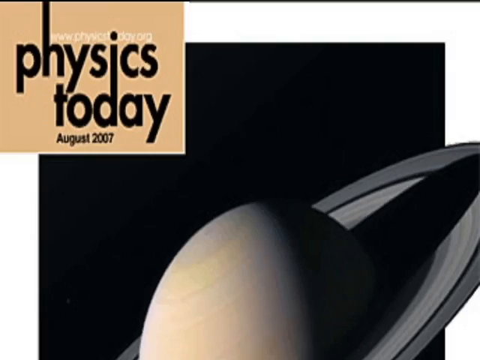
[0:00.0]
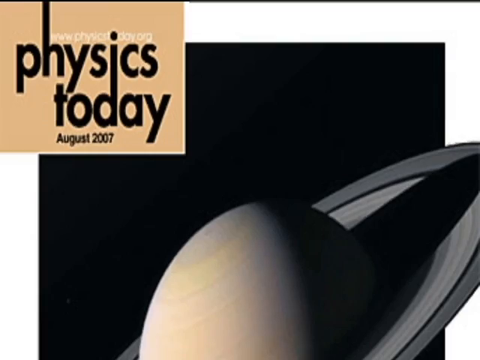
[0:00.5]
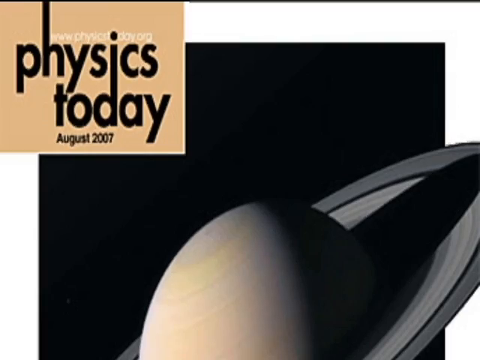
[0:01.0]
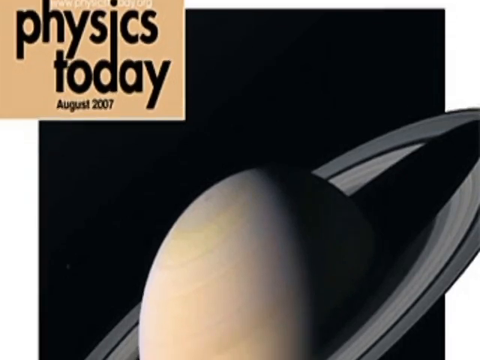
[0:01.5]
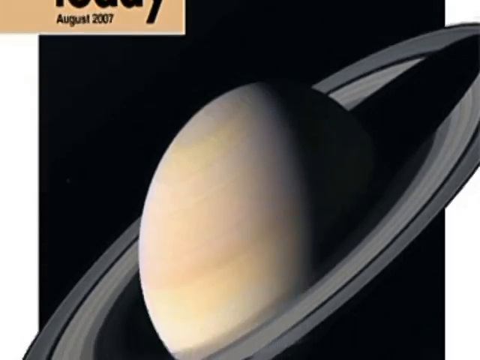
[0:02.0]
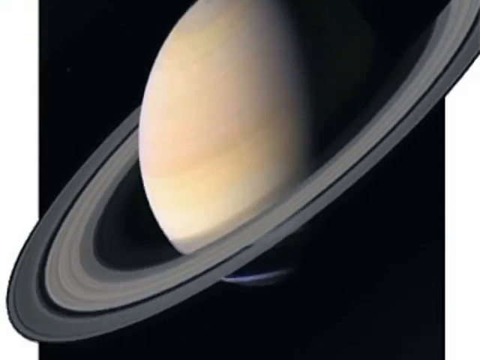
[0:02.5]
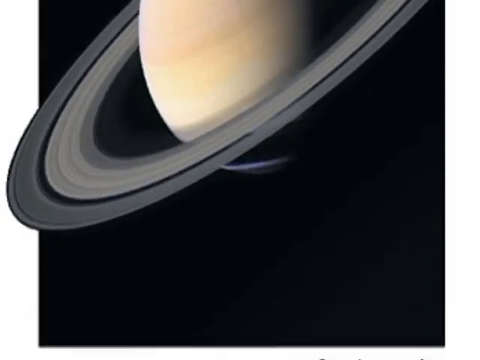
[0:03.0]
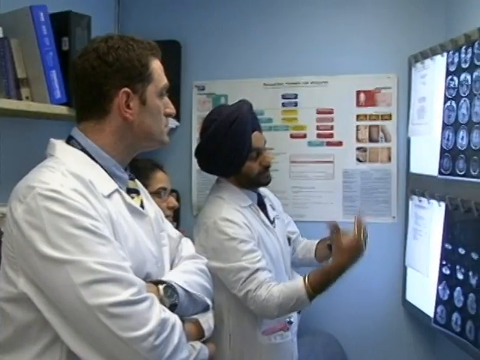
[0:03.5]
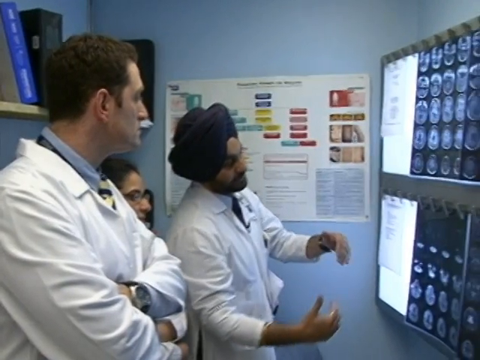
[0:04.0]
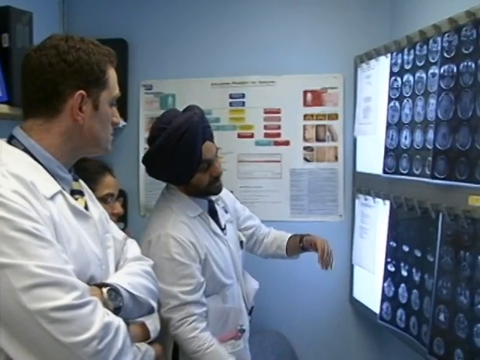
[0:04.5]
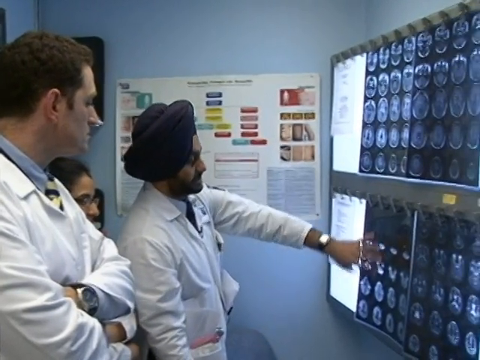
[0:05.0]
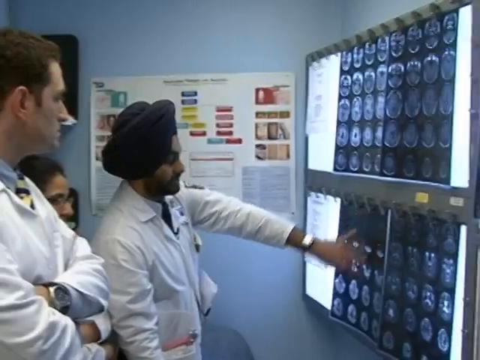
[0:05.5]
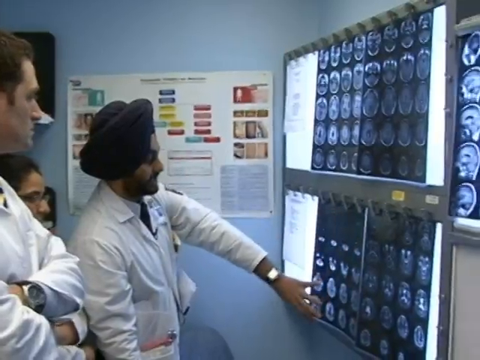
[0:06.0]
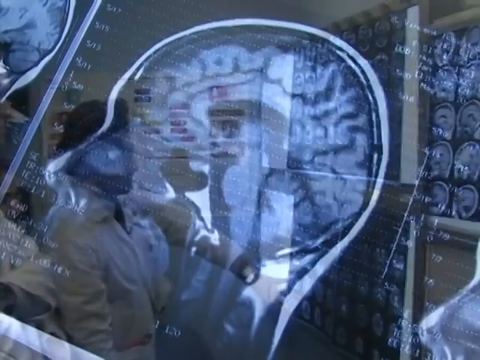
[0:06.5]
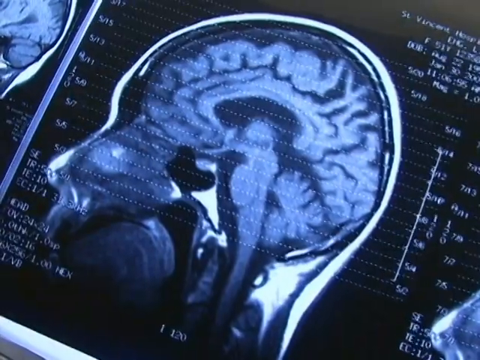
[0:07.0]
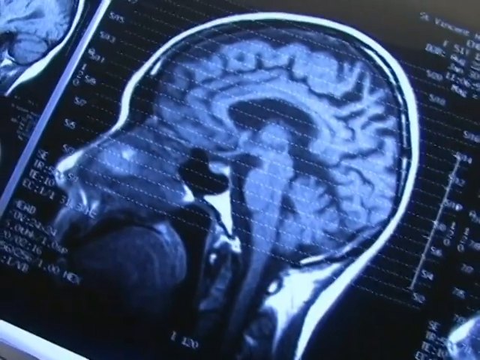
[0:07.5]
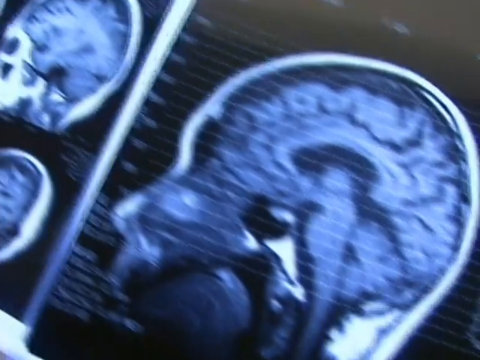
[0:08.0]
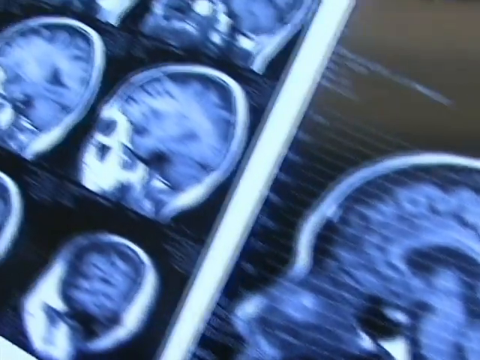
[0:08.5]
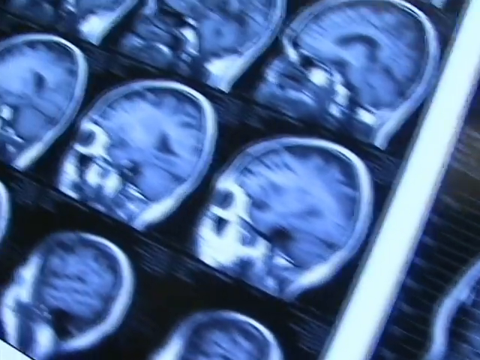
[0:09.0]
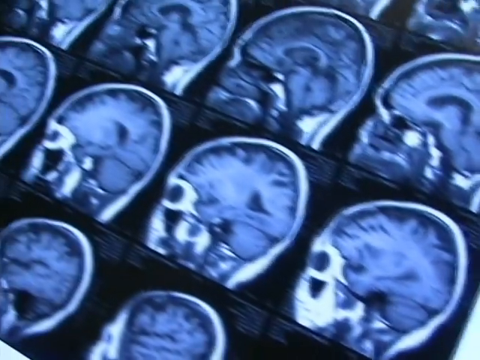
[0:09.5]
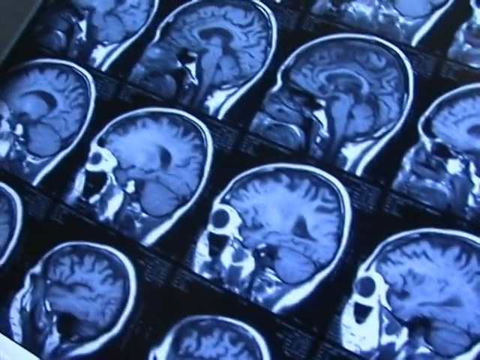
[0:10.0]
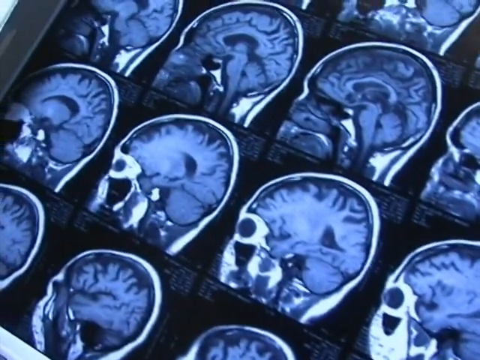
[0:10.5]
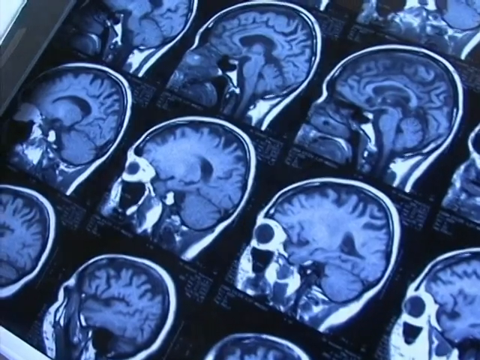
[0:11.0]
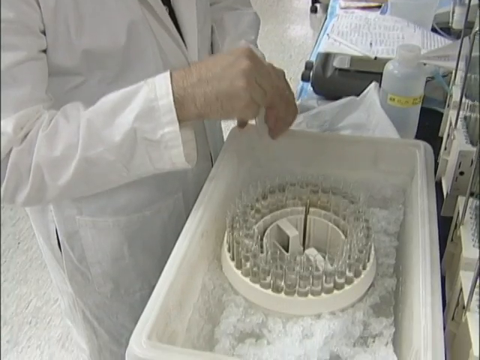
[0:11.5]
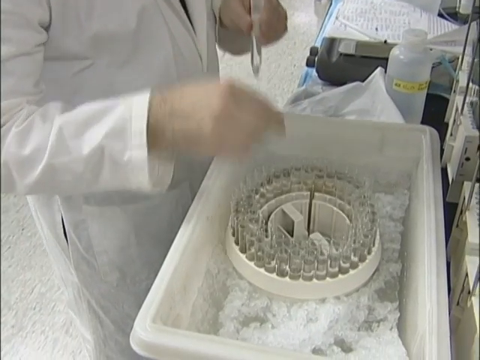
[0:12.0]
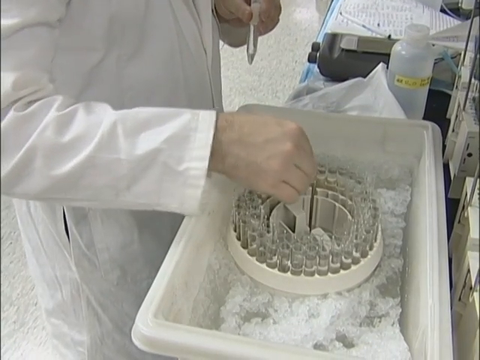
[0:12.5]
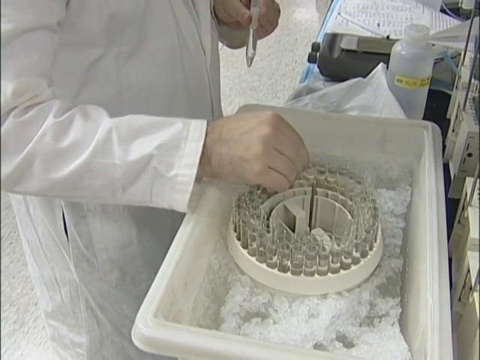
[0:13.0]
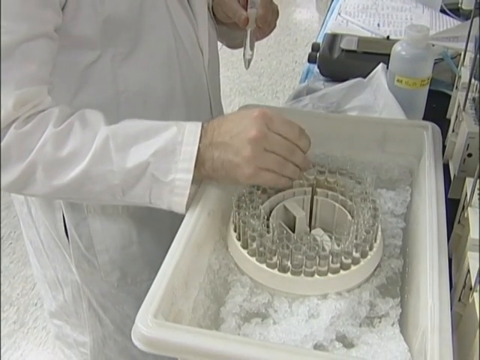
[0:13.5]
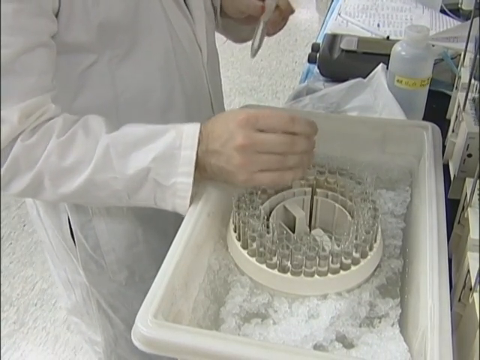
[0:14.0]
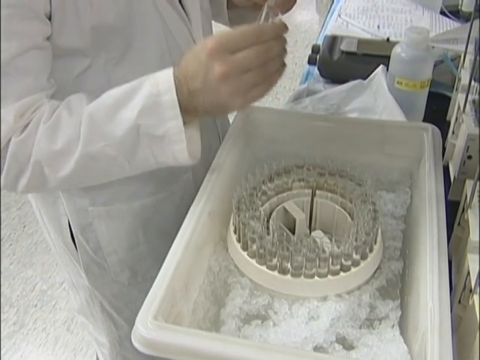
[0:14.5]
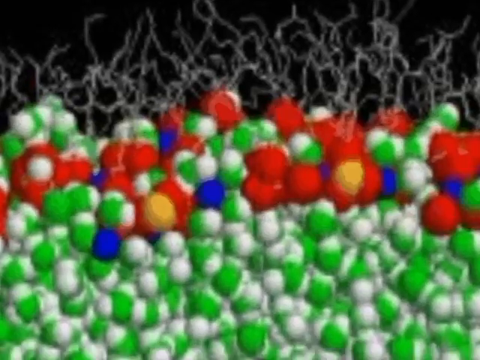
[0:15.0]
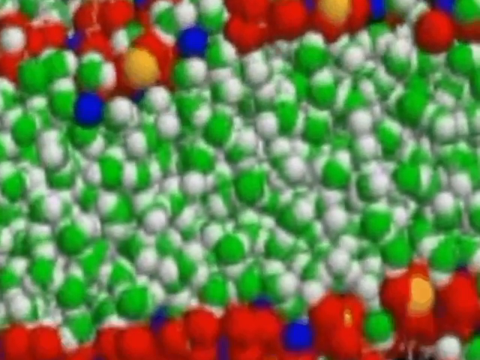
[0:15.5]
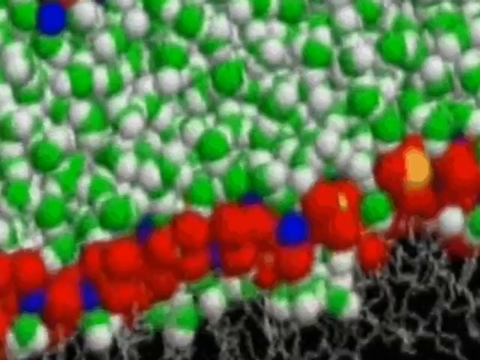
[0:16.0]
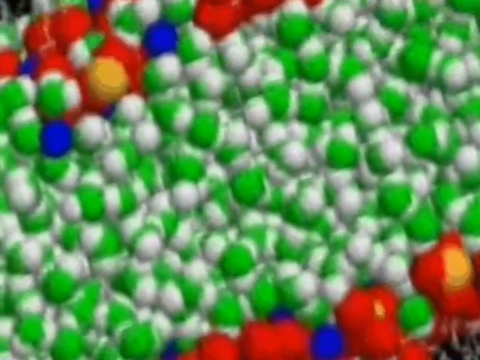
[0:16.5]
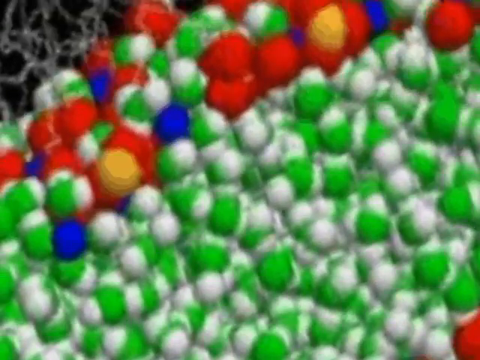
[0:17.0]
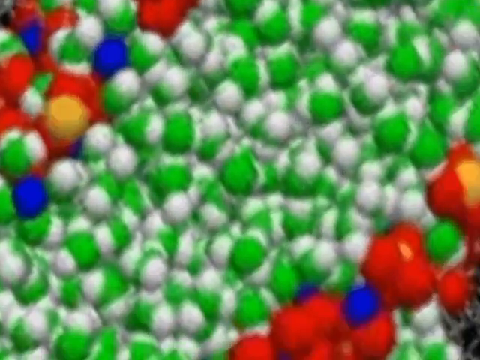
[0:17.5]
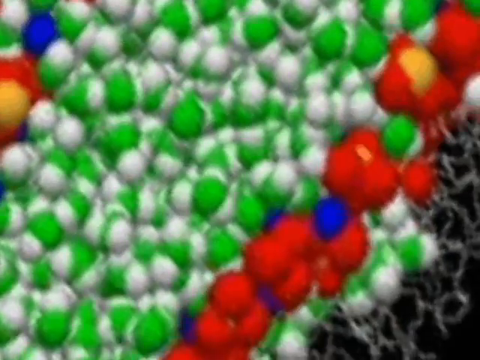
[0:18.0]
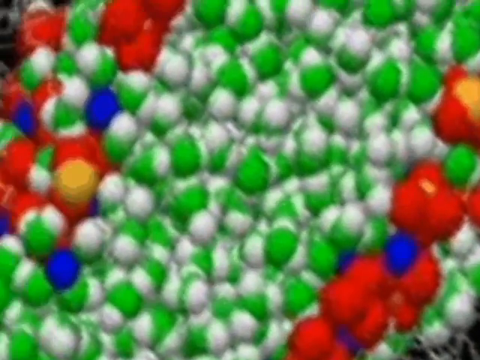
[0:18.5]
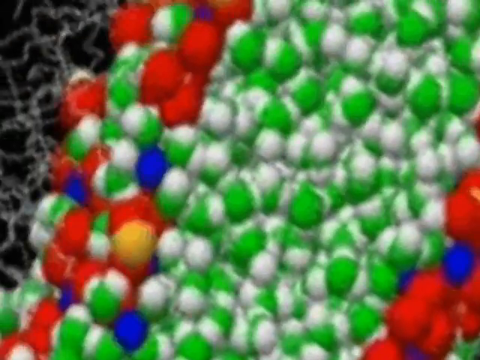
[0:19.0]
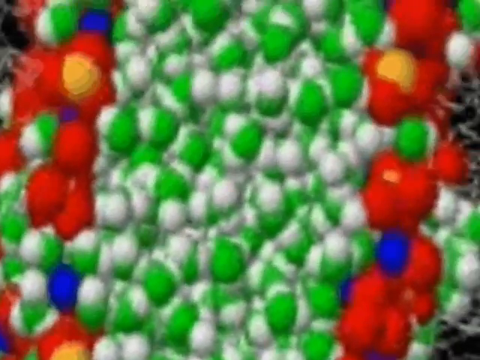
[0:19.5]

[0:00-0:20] The video opens with a title page for Physics Today magazine, August 2007, showing an angled planet with a ring around it. Next, a group of three scientists in white laboratory coats stand looking at an x-ray machine showing the inside of the brain. There is a chart on the far wall and a bookshelf with files behind the scientist. The first scientist, closest to the x-ray, has a turban and a beard and points with his hand to the bottom x-ray screen, which shows a range of x-rays of the brain. A close-up of an x-ray of someone's brain follows, and the camera swoops to the left across many brain x-rays in sequence. Then a scientist in a white lab coat looks at a group of test tubes in a spinning machine. He appears to take a test tube from the central spinner, then takes its contents and appears to put them into another test tube. A screen then shows colorful cells or genes in green, white, red, blue and yellow.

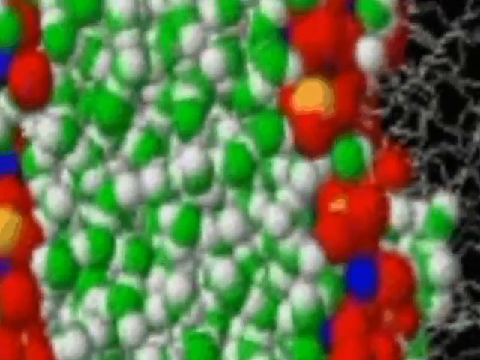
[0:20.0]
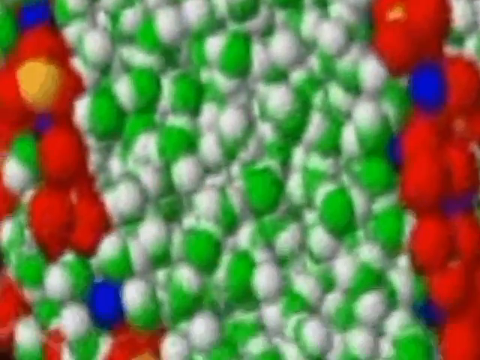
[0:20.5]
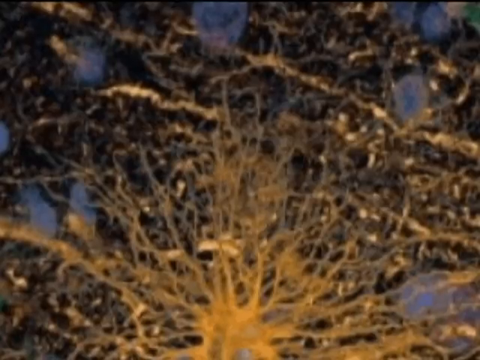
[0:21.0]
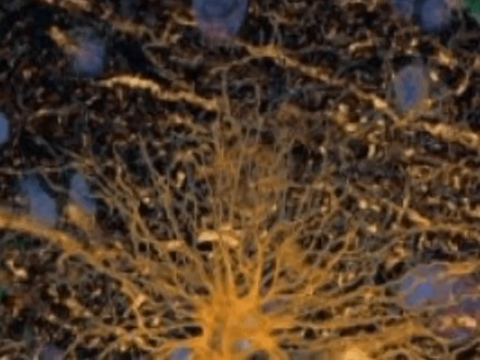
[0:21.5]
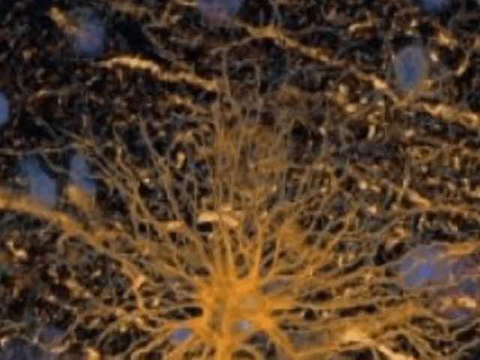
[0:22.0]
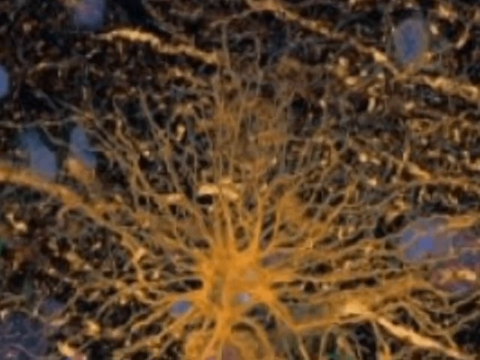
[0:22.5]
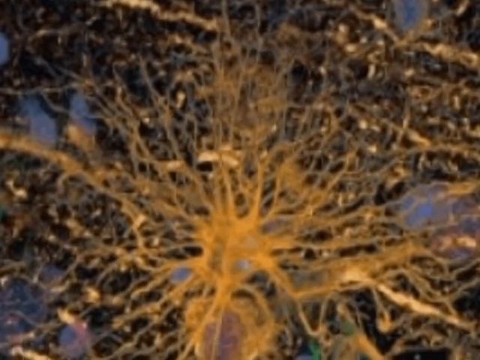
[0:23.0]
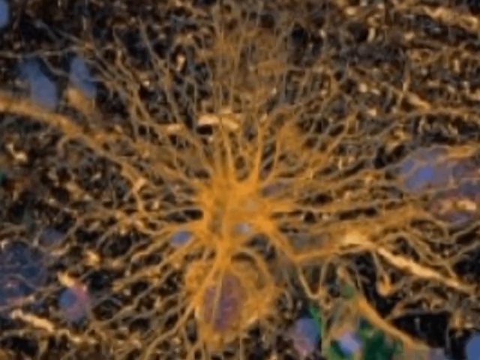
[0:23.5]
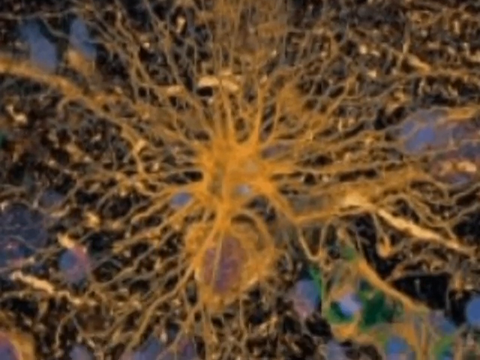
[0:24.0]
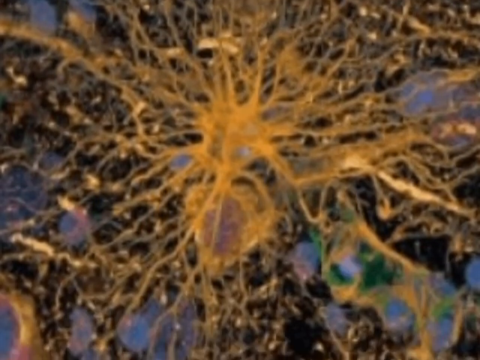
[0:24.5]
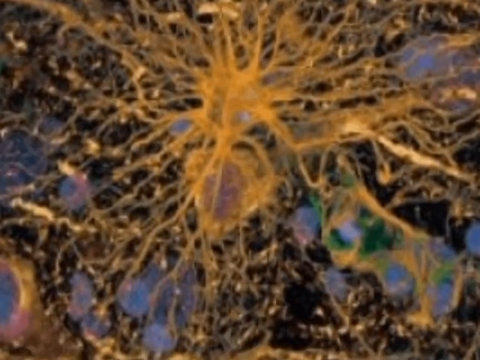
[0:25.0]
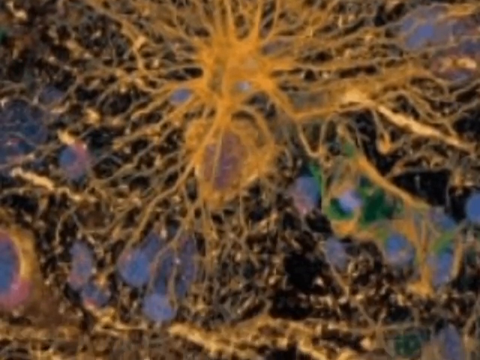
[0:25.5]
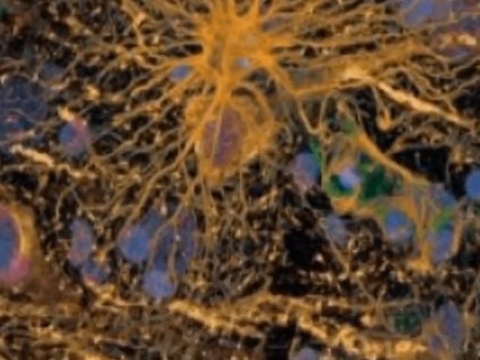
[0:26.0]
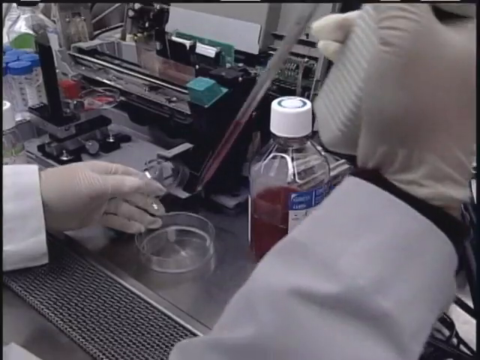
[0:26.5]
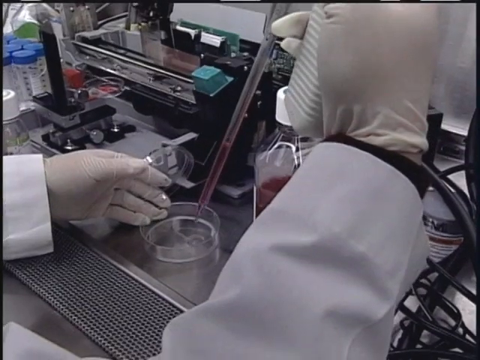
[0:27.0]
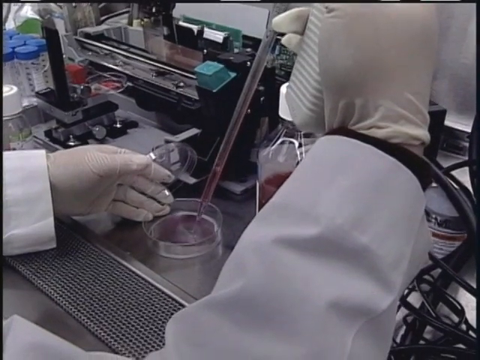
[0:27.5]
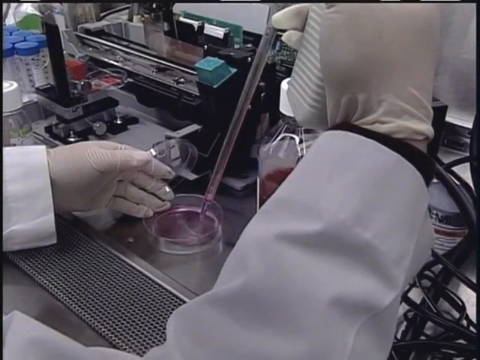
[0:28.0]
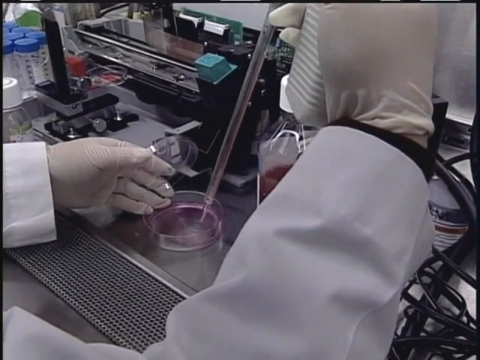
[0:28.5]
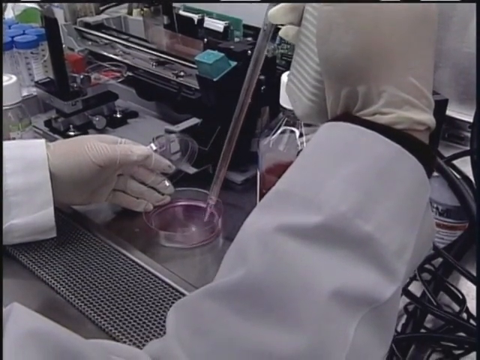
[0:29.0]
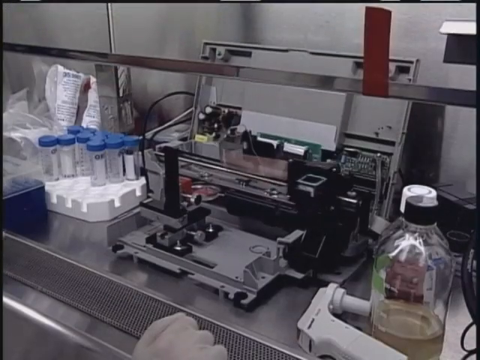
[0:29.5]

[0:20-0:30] The footage of groups of multicoloured cells or genes continues. A close-up follows of some sort of organism with a white, creamy centre and veins coming from it, covering another structure. Inside a laboratory, a scientist in a white overall and white gloves holds a long pipette filled with pink liquid and places it into a Petri dish on the work surface. There is a magnifying glass to the left of the scientist's hand. He empties the pipette of pink liquid completely into the Petri dish. Then a machine is working in the background, with a reader or printer going from right to left across its front.